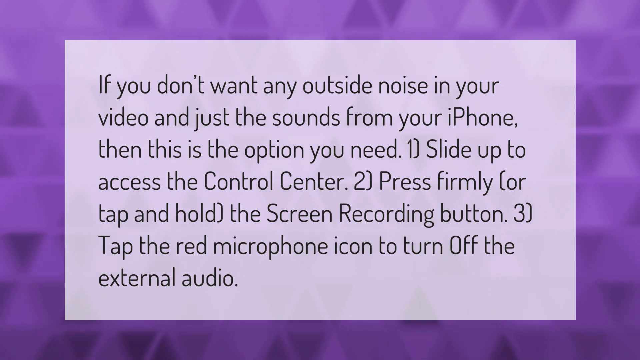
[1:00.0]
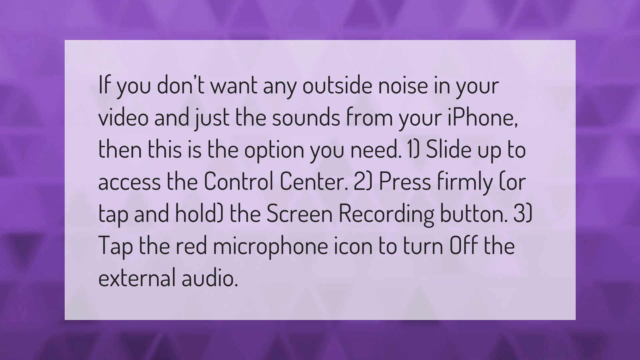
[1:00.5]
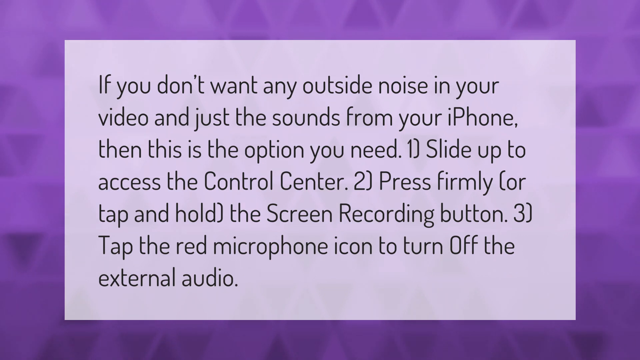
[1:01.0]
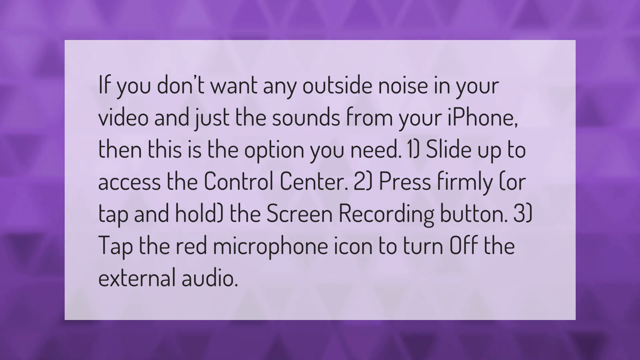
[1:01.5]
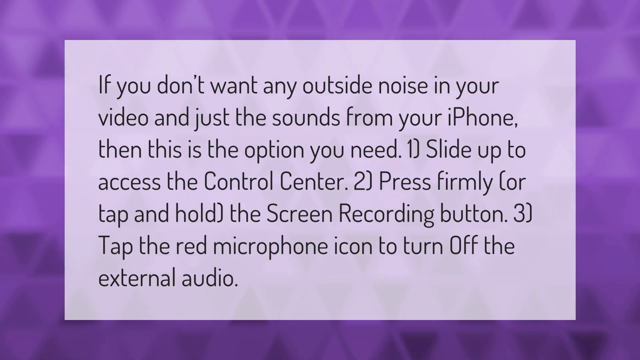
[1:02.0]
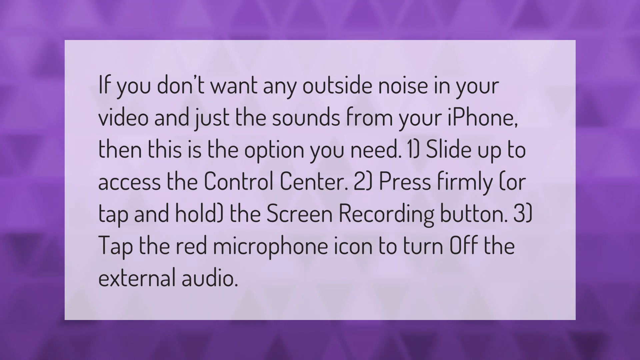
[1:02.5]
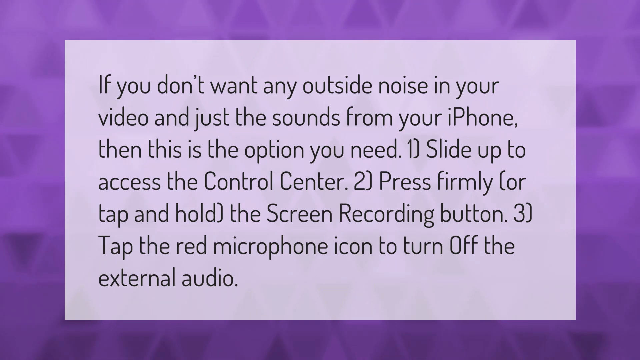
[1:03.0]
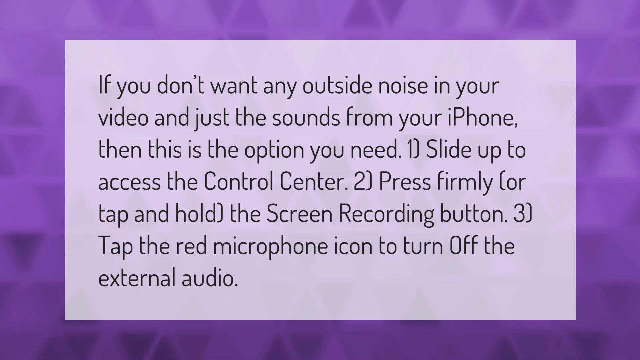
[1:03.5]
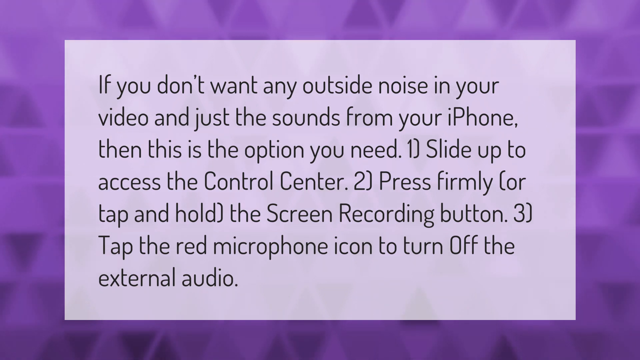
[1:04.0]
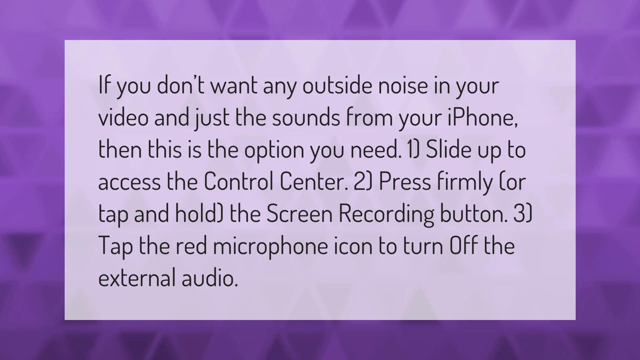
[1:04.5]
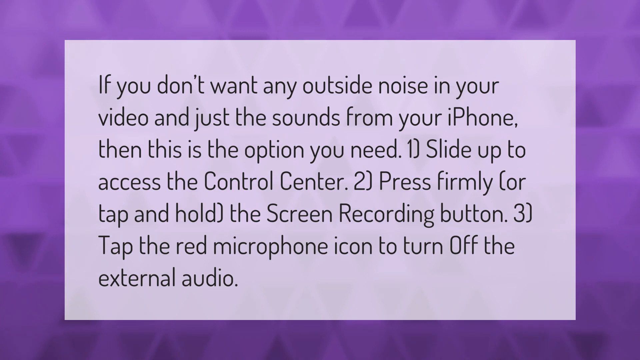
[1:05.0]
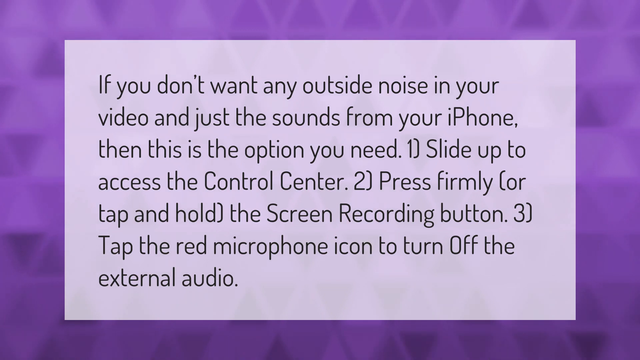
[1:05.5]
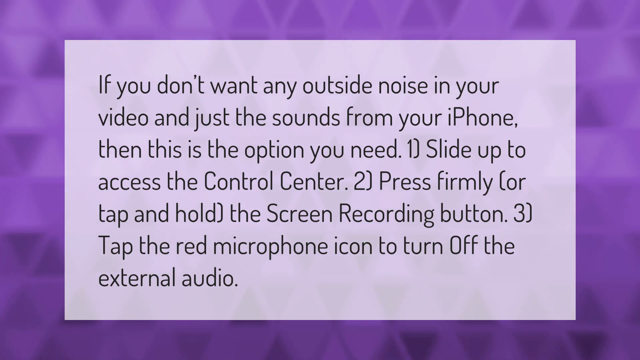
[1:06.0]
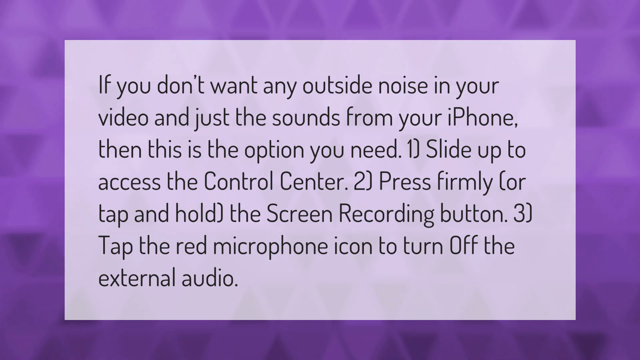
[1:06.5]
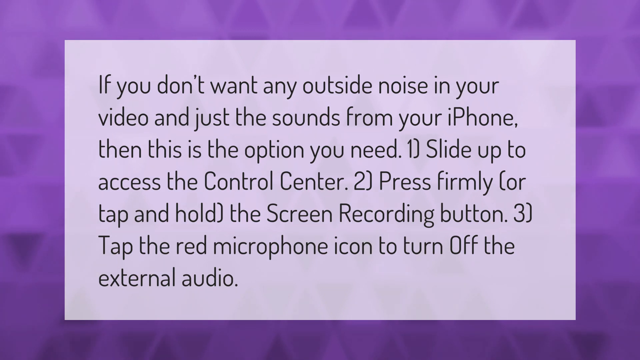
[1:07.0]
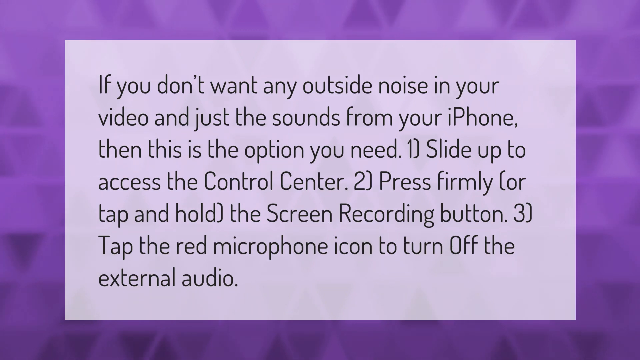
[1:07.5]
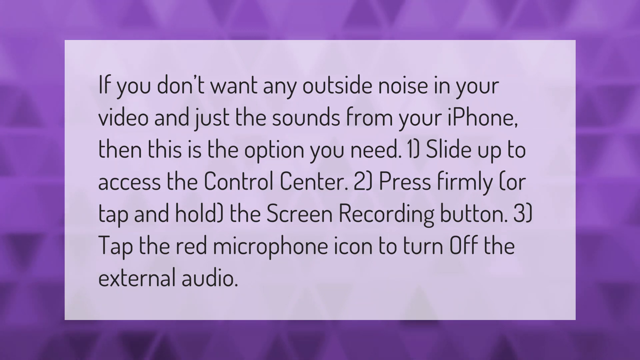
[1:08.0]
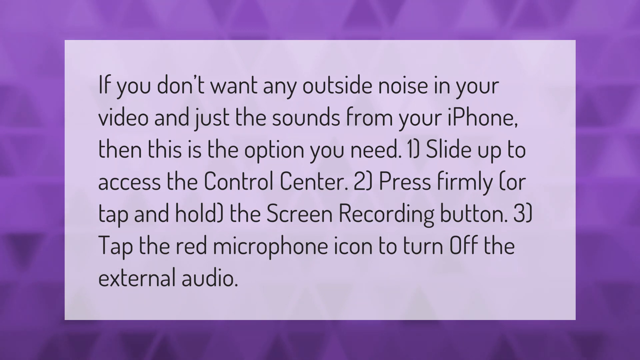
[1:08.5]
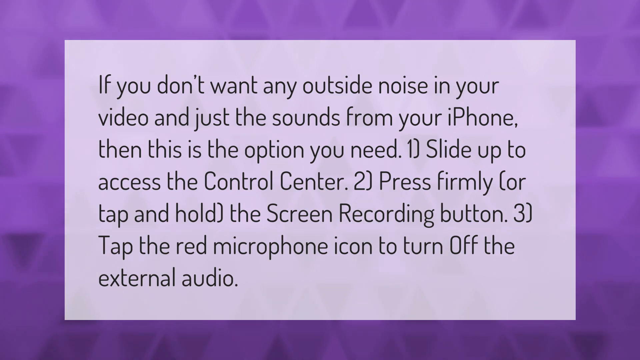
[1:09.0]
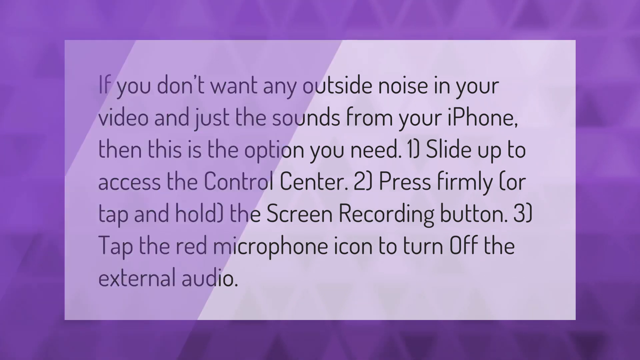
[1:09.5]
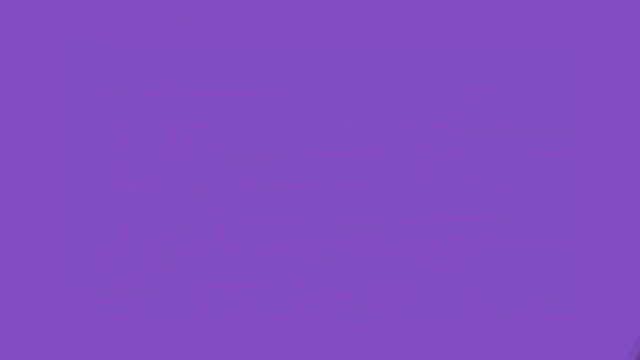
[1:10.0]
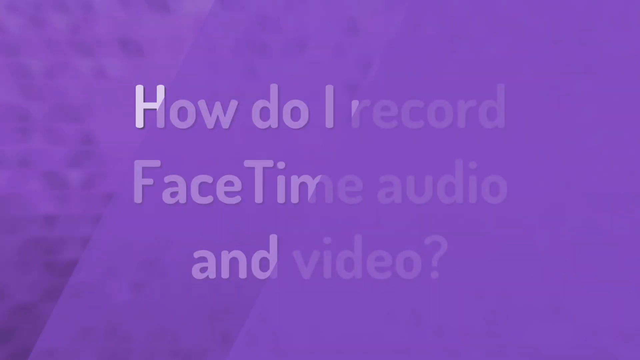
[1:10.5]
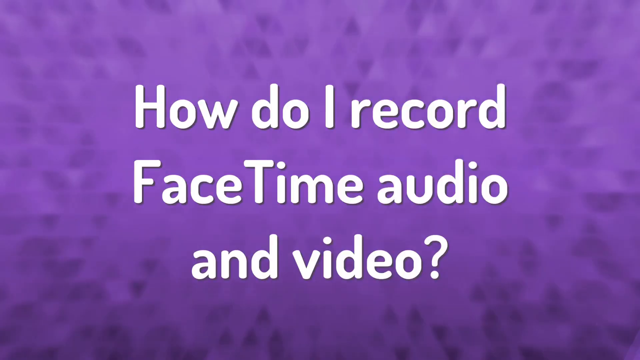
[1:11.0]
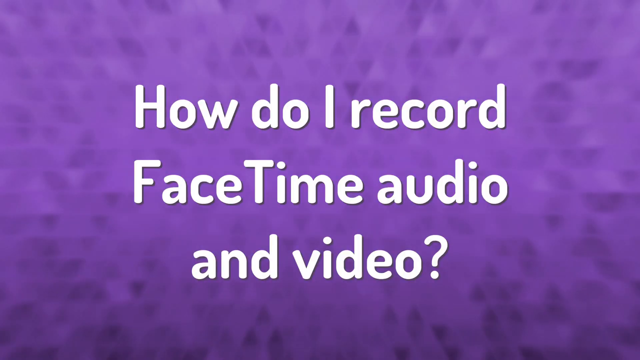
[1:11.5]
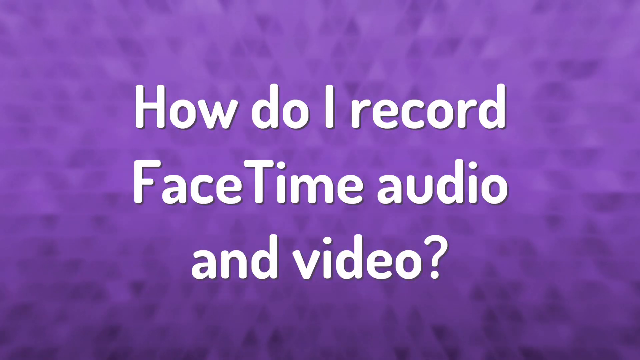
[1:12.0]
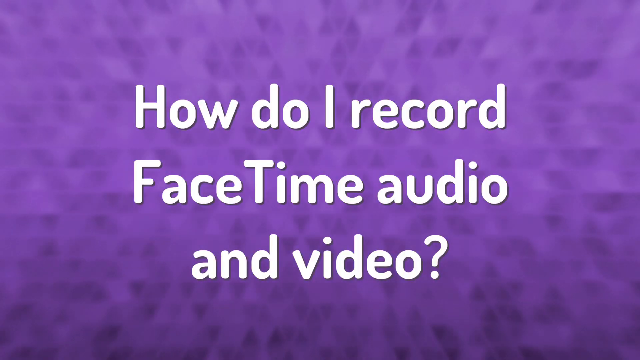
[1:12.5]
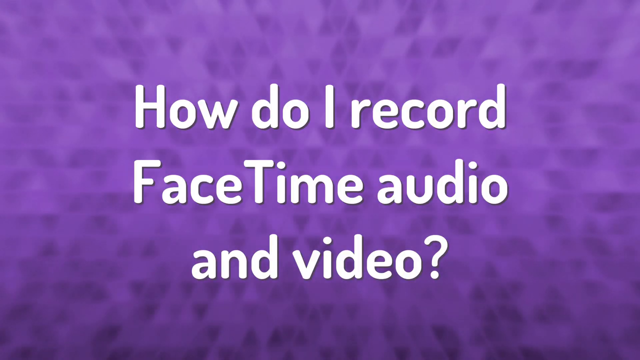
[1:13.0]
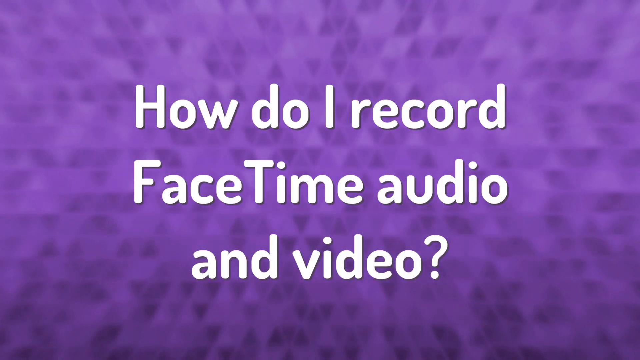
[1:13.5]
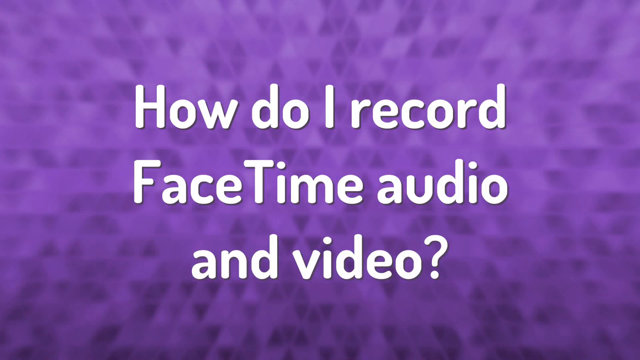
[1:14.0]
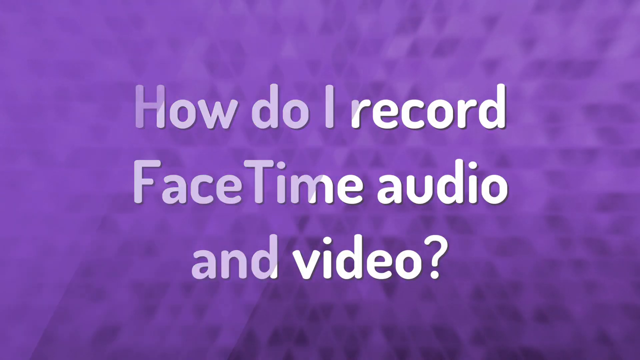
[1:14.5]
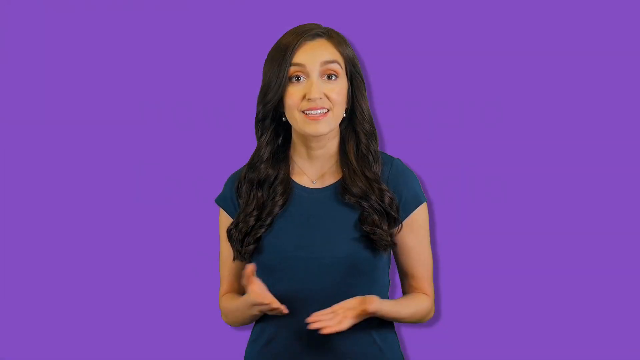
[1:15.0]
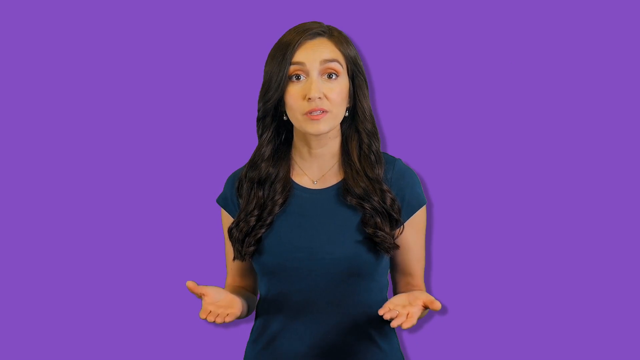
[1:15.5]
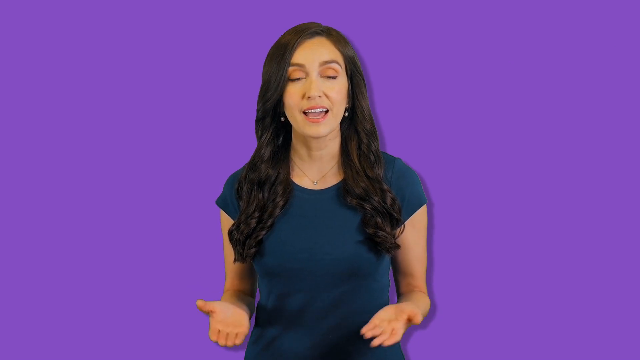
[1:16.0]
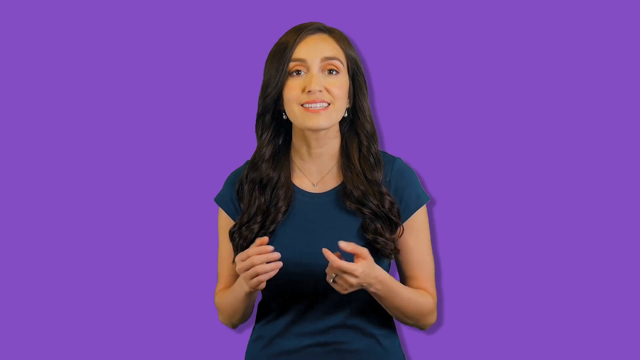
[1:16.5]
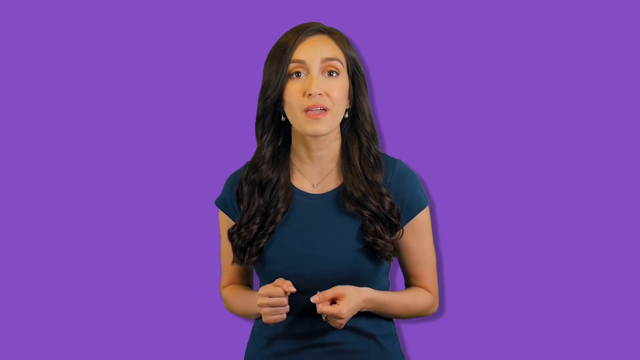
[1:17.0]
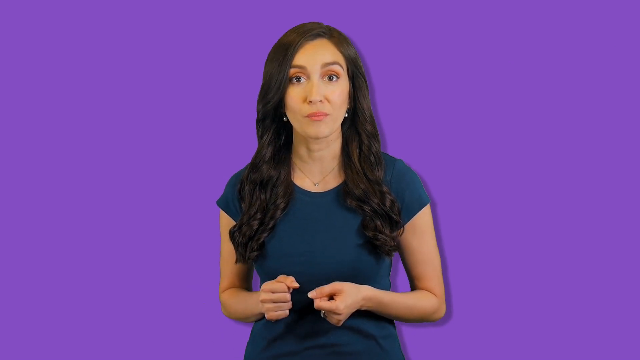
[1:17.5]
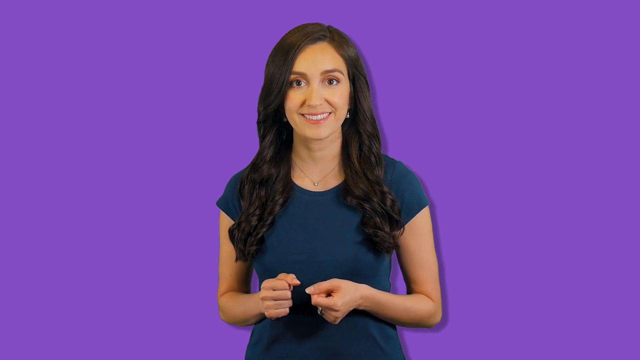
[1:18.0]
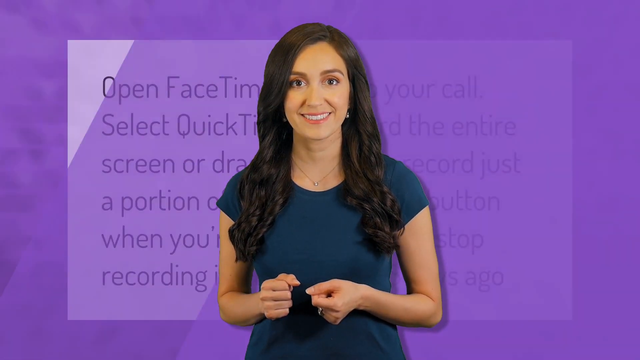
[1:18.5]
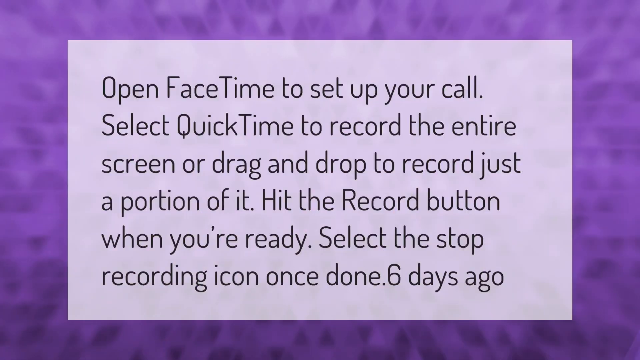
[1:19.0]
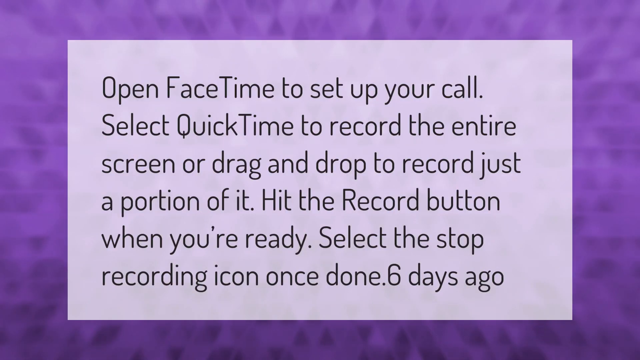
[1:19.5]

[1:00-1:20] A lavender background in various shades from light to dark is patterned with small triangles, some pointing up, some pointing down, some close together to form images. In front of the background is a box that is a light lavender, with black text reading "if you don't want any outside noise in your video and just the sounds from your iPhone Then this is the option you need. 1. Slide up to access the control center. 2. Press firmly or tap and hold the screen recording button. 3. Tap the red microphone icon to turn off the external audio." The video transitions to another lavender background patterned with upward and downward triangles, with white text in the middle reading "How do I record FaceTime audio and video?" Then a woman appears in the middle of the screen in front of a lavender background; she appears to be explaining, answering that question.